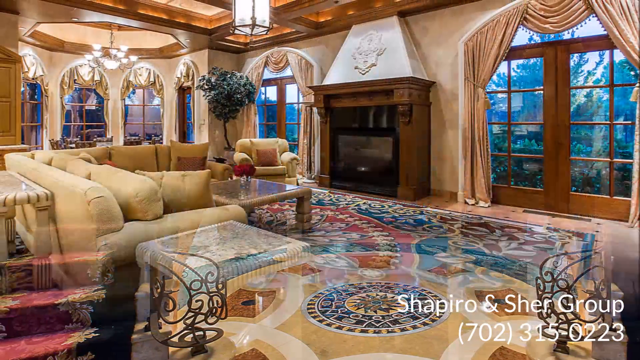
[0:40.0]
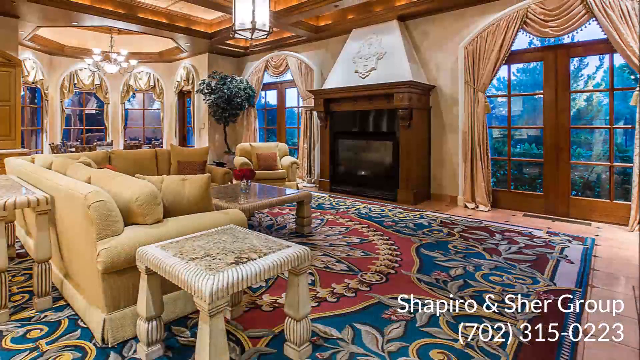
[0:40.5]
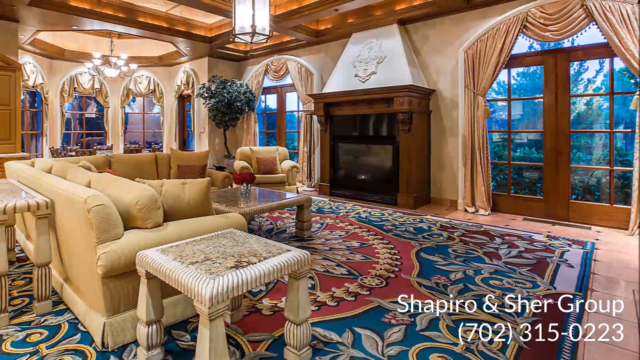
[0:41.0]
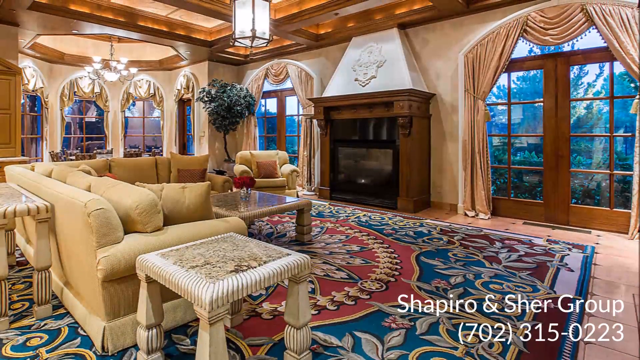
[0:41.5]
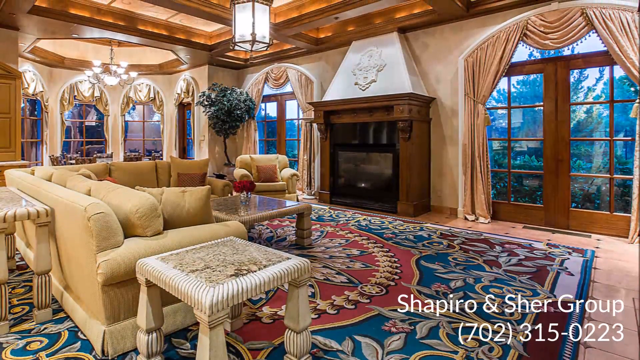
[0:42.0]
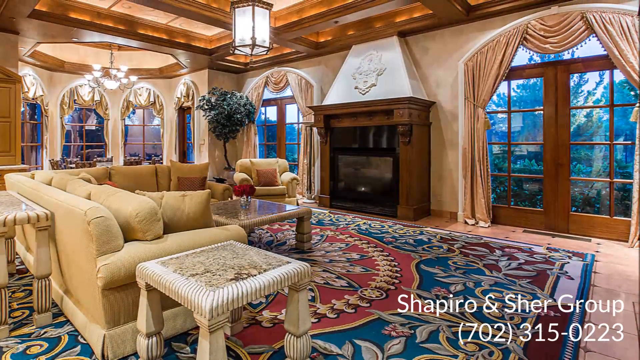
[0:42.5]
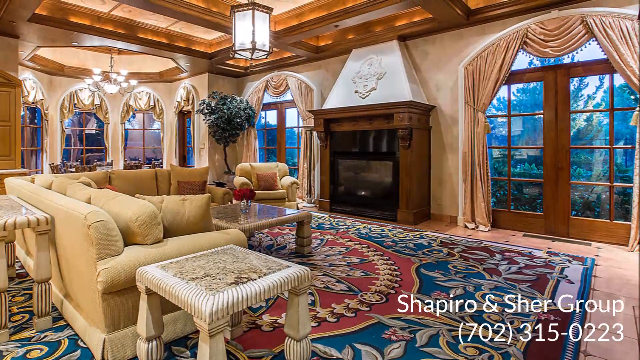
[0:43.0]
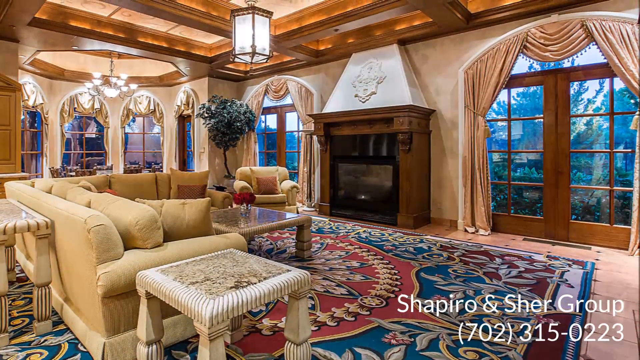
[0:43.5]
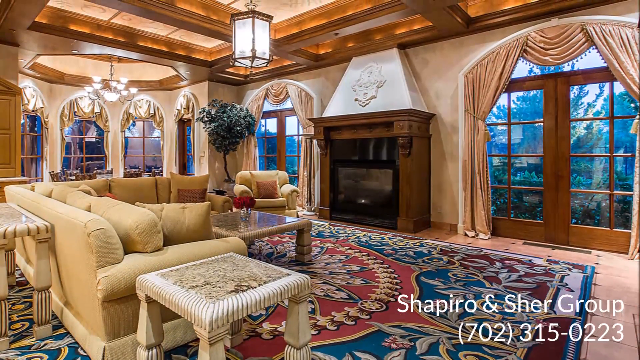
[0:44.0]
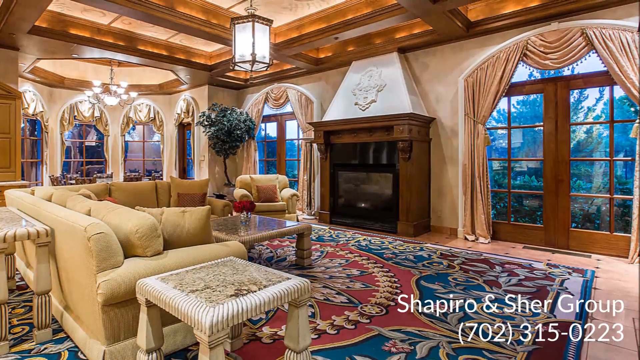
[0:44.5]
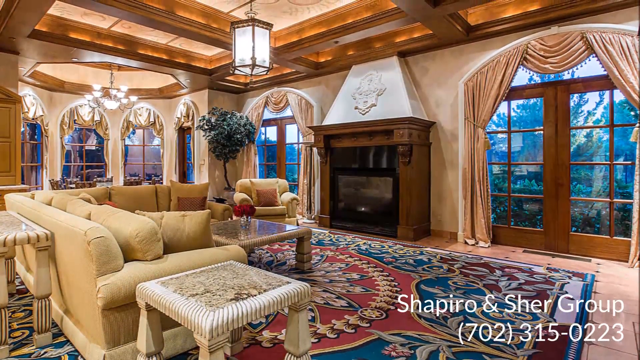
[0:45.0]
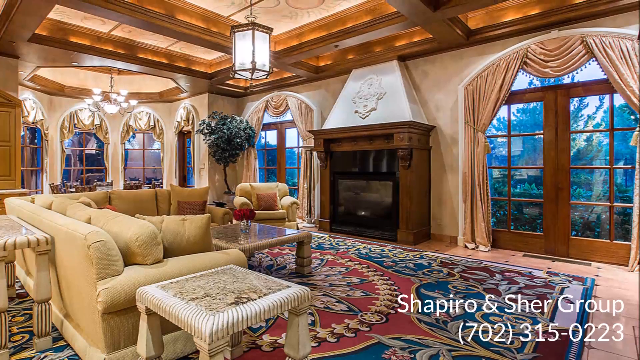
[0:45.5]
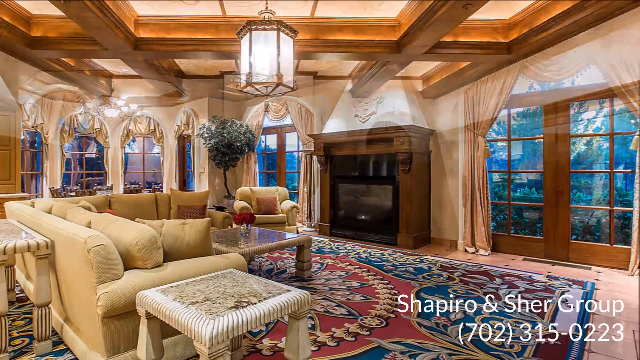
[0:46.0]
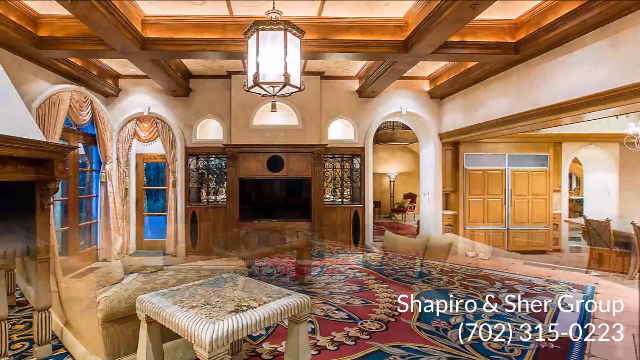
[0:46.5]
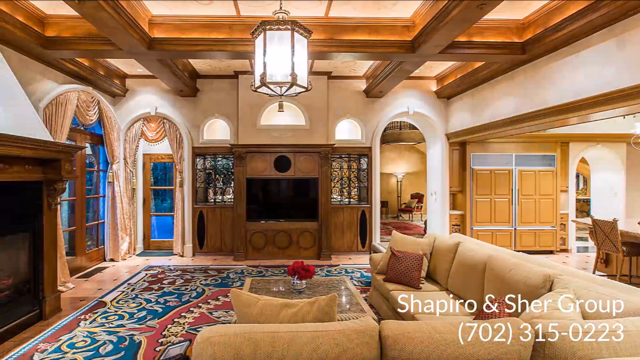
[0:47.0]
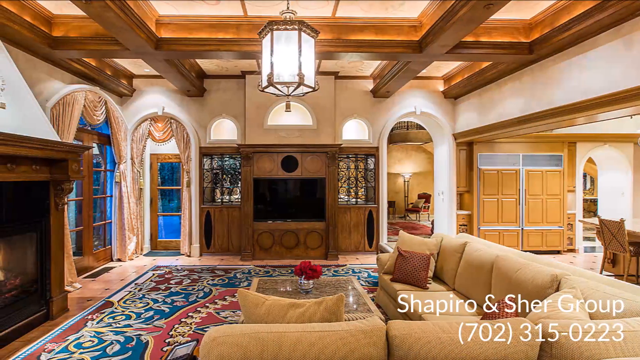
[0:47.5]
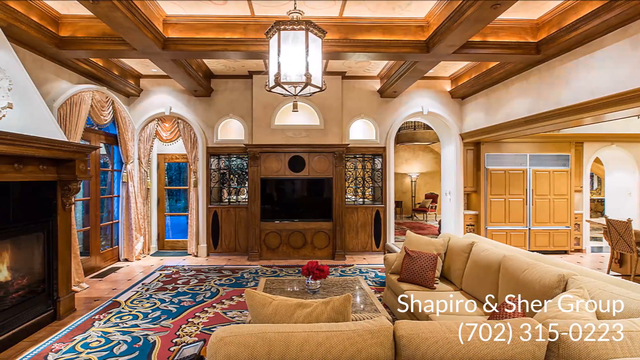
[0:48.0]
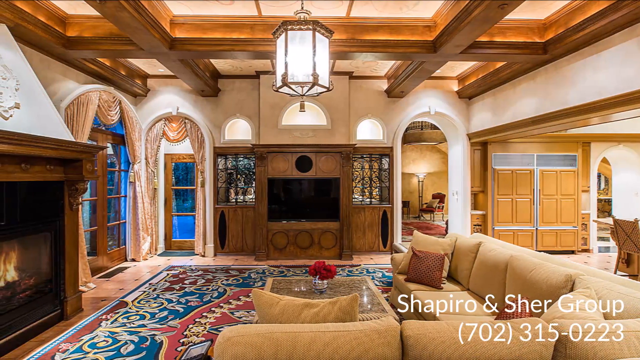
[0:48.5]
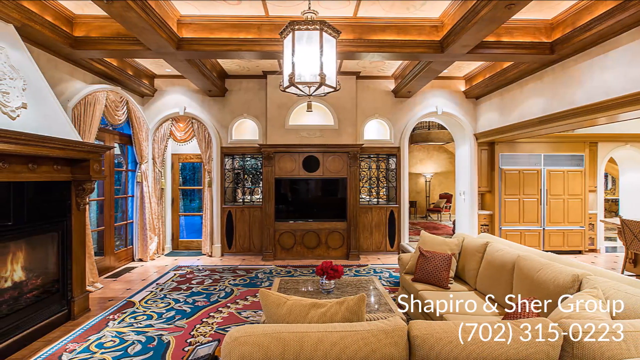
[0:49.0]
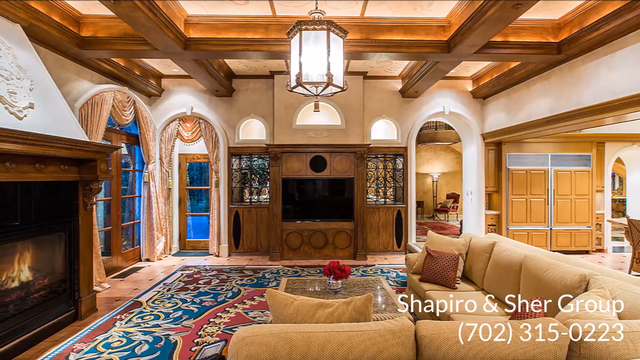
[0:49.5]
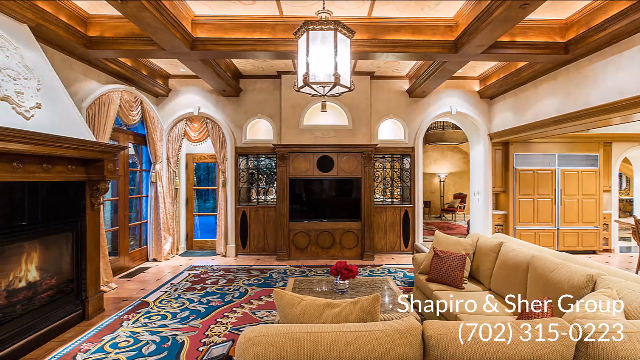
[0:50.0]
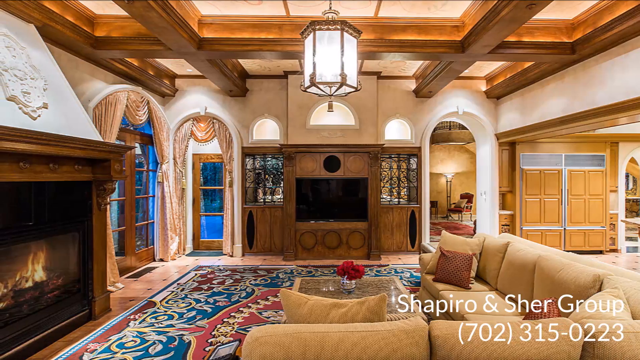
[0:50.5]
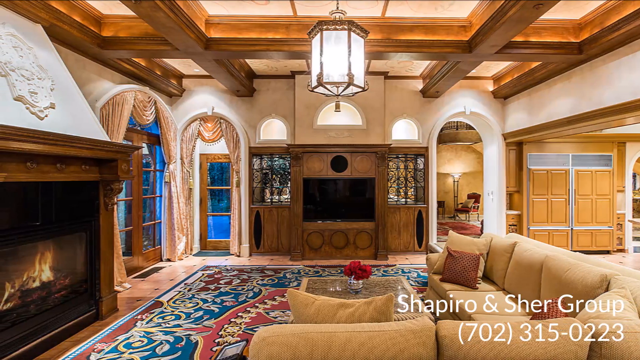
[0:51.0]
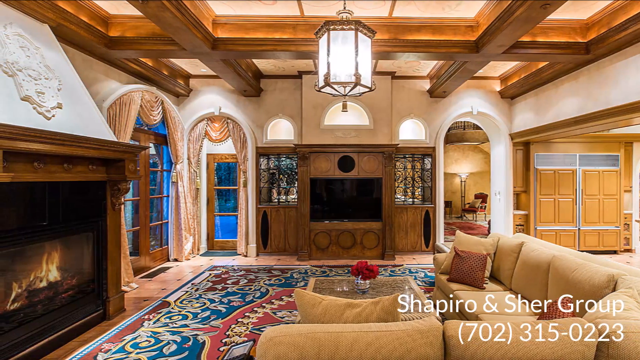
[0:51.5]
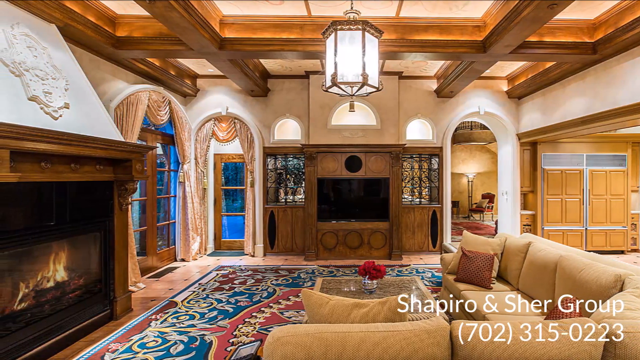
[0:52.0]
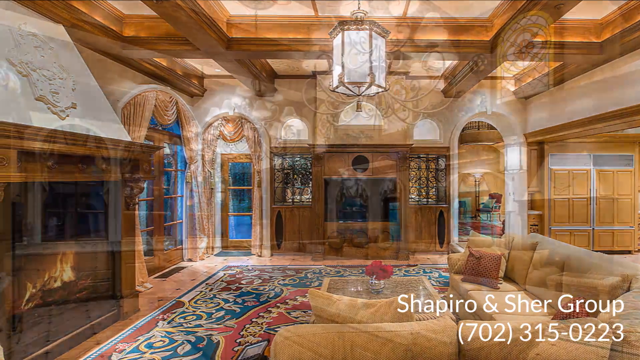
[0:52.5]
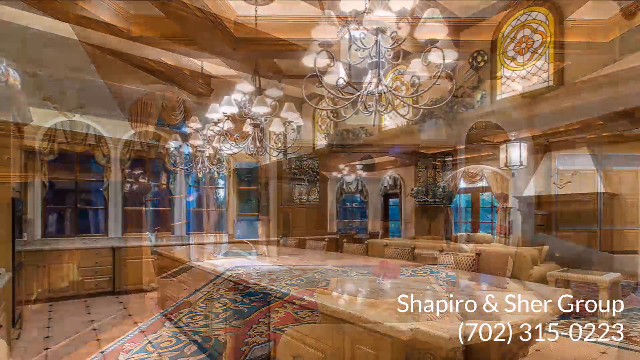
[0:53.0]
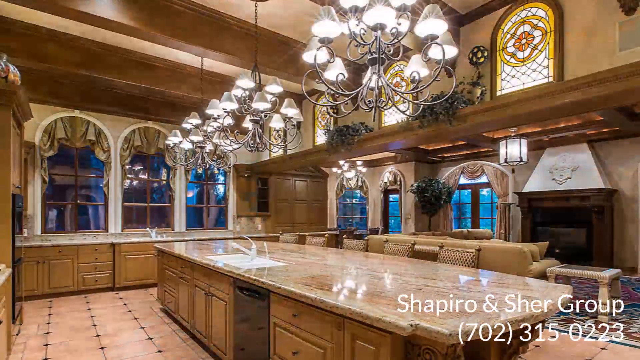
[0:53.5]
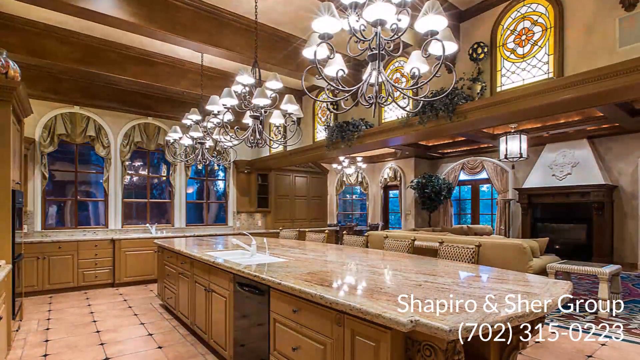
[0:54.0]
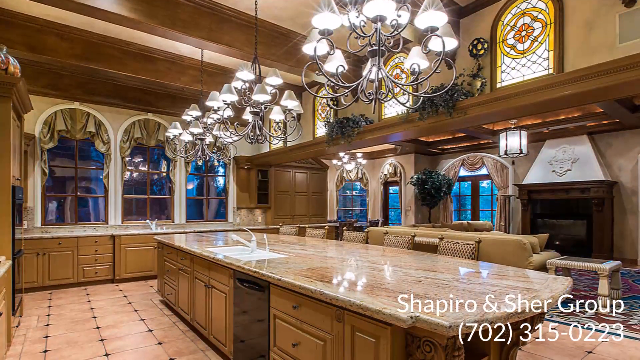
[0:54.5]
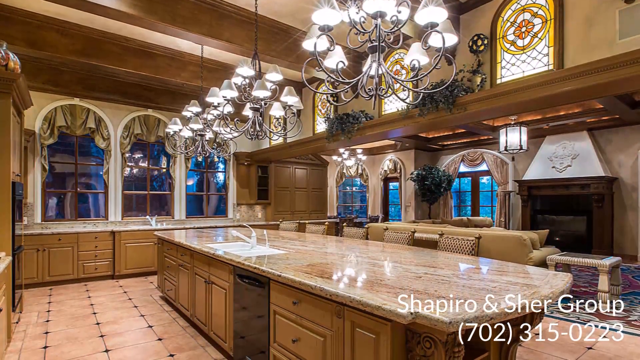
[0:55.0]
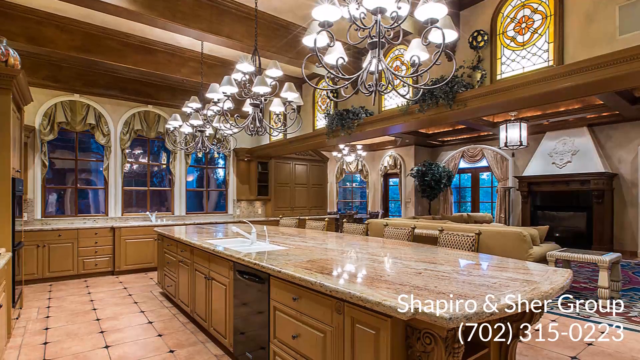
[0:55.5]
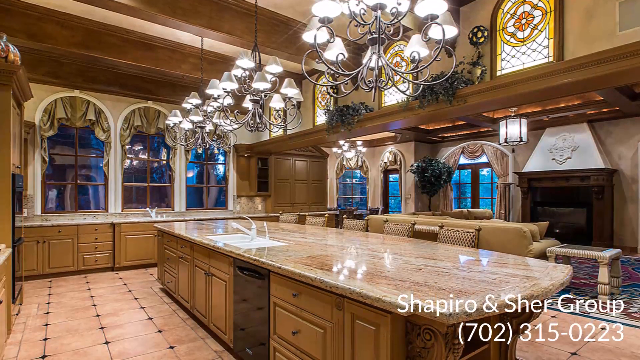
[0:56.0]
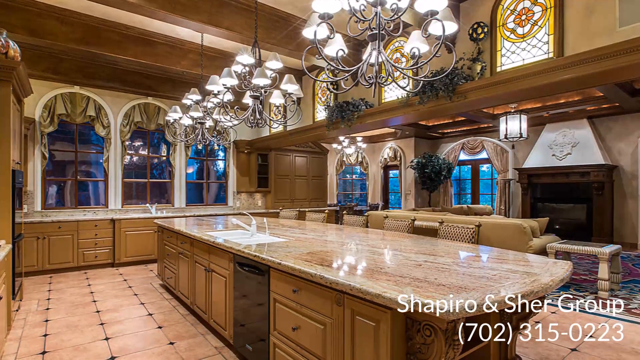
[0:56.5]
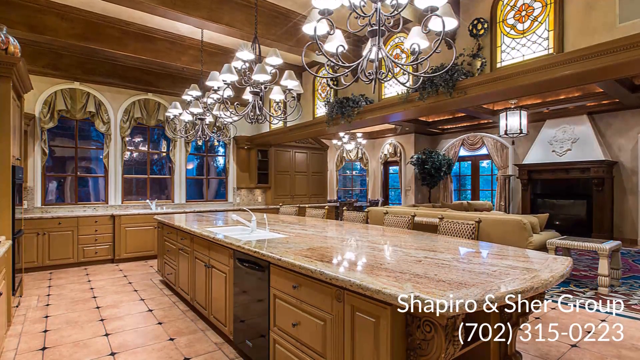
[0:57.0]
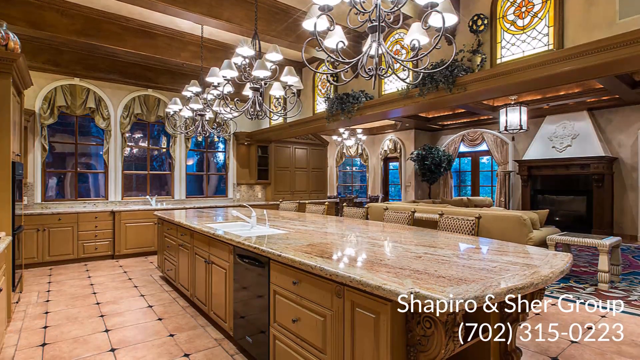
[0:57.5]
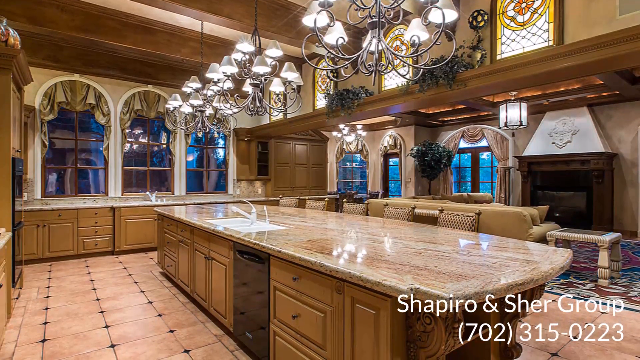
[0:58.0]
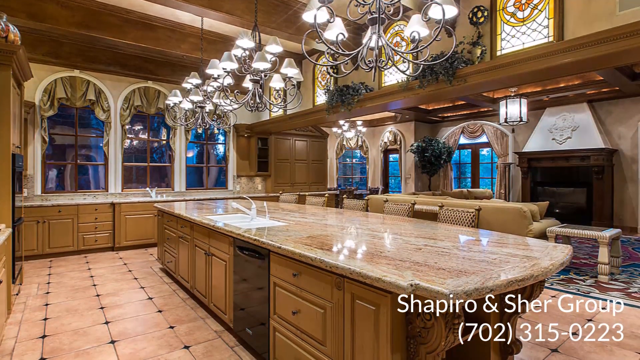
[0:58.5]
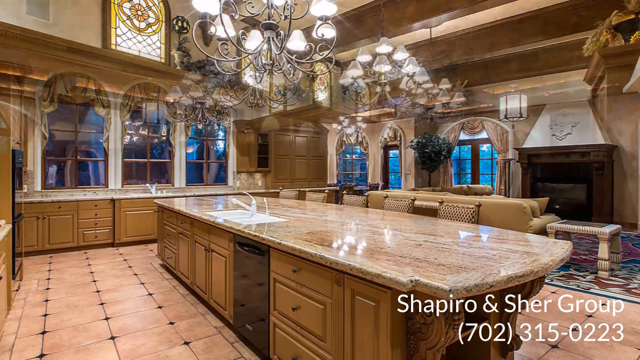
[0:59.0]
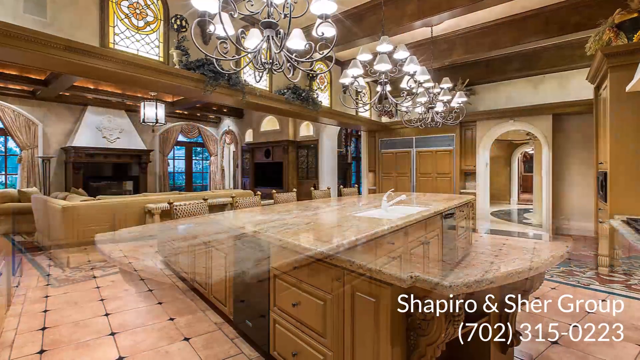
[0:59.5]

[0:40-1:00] The scene changes to a living room. To the left are some couches and a coffee table, with a big rug underneath them all. The rug is blue and red with multiple flower-like, plant-like designs. In the background to the right is a fireplace, and on the walls are many very large glass doors spread throughout the wall. A hanging light is up above, and another hanging light is in the background to the left. The scene then shows the same living room from a different angle: the fireplace is on the left side, the couches are on the right side, and the hanging light is at the top middle. The scene then changes to what looks like a kitchen area, with a very large counter in the middle, kind of like a counter island.